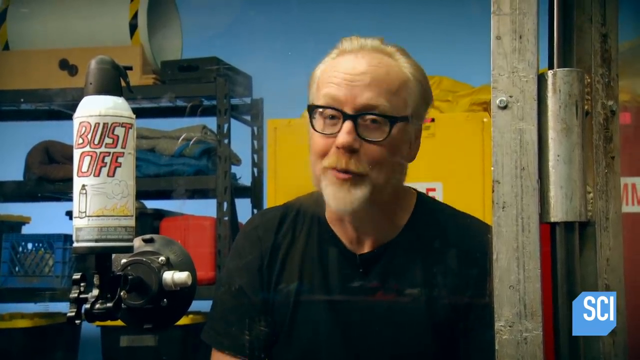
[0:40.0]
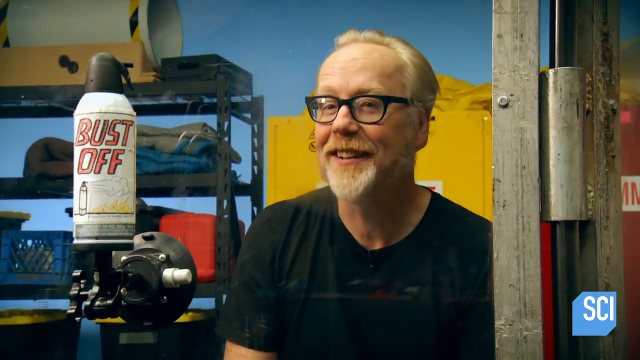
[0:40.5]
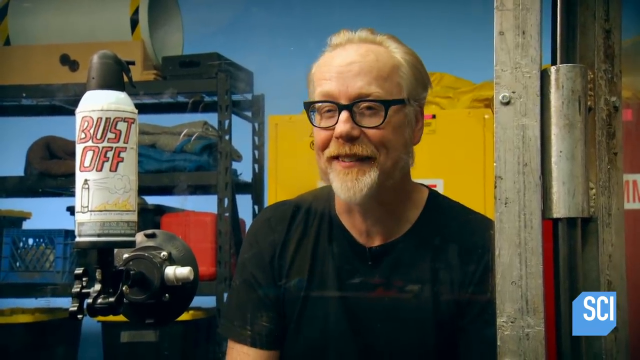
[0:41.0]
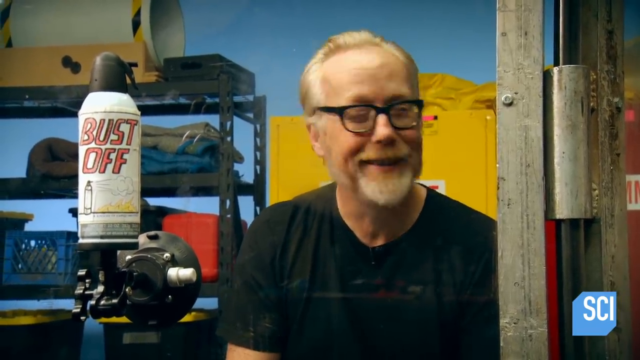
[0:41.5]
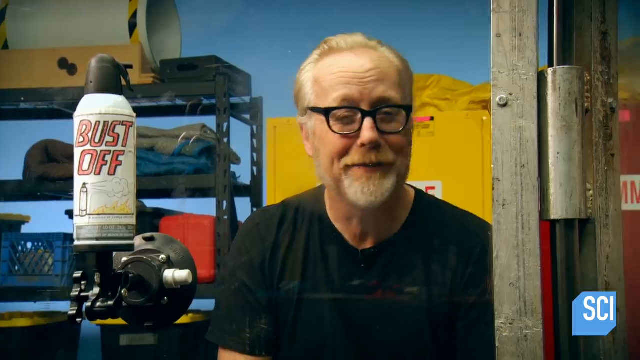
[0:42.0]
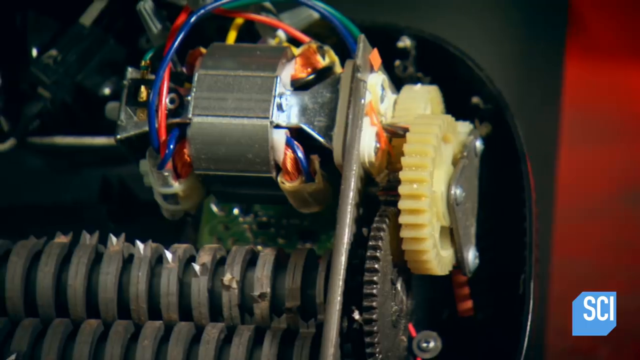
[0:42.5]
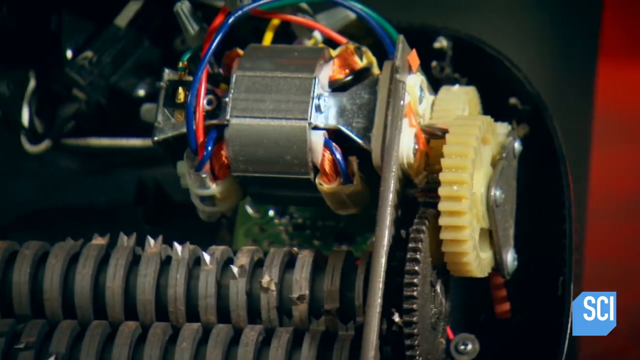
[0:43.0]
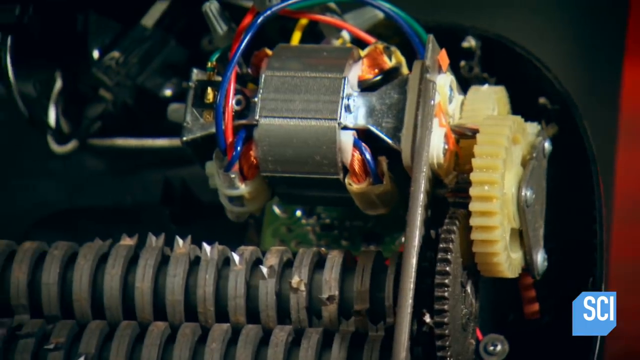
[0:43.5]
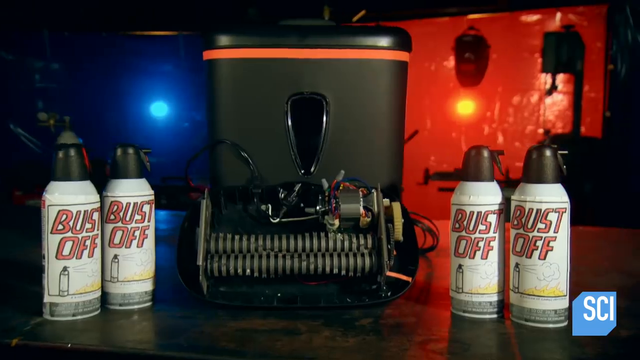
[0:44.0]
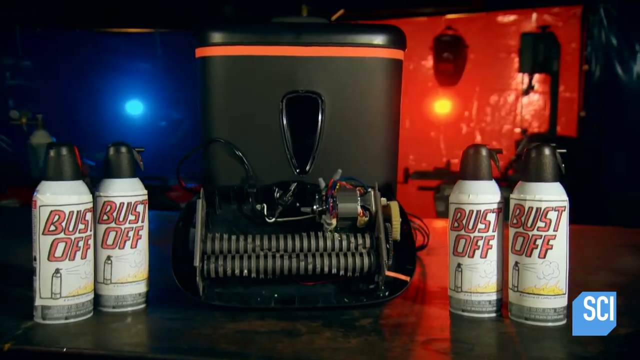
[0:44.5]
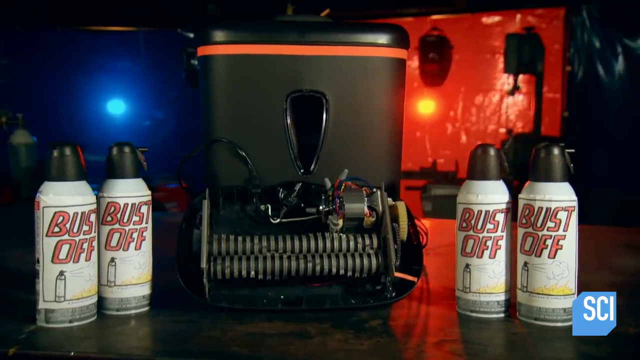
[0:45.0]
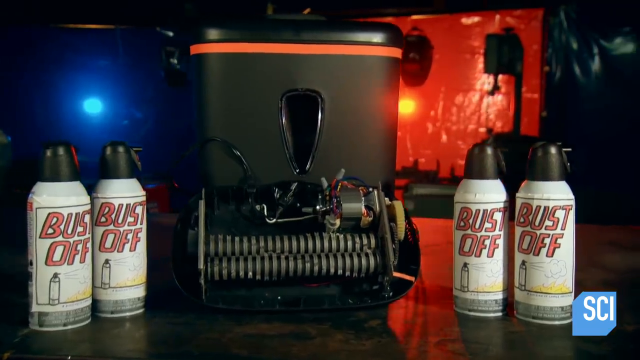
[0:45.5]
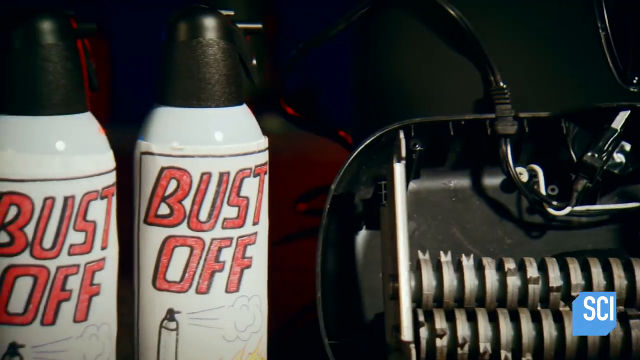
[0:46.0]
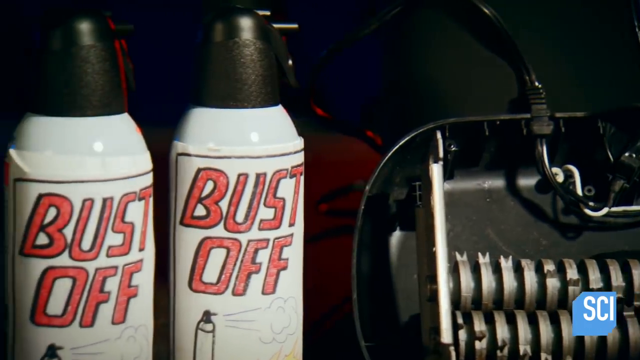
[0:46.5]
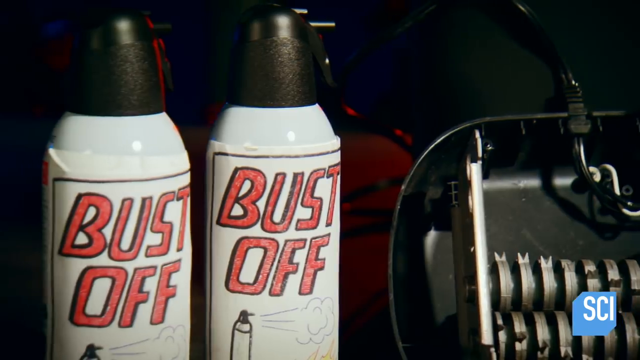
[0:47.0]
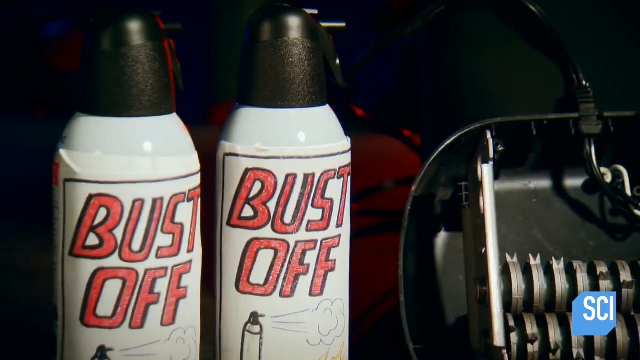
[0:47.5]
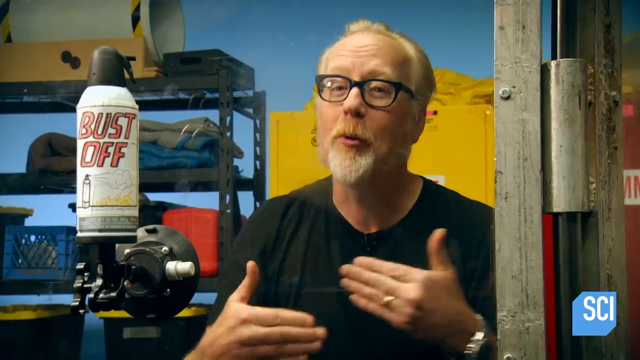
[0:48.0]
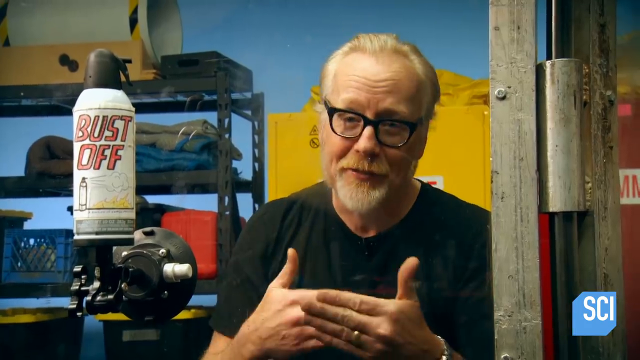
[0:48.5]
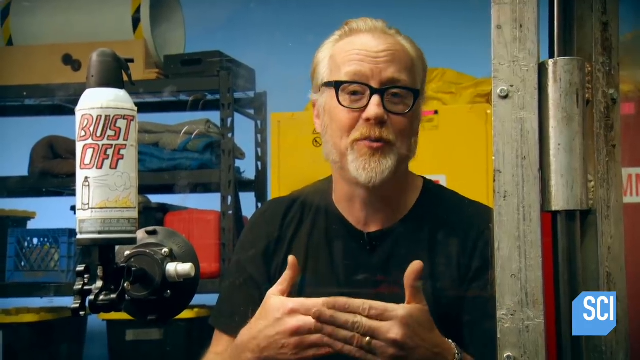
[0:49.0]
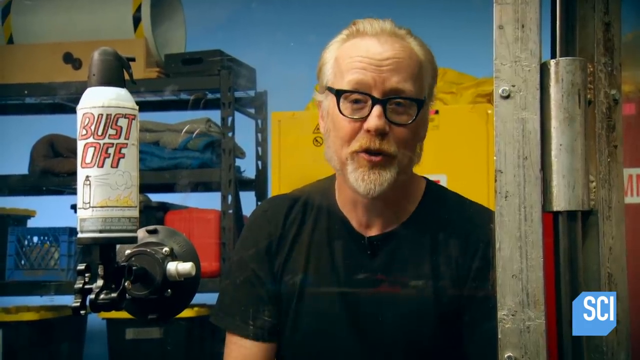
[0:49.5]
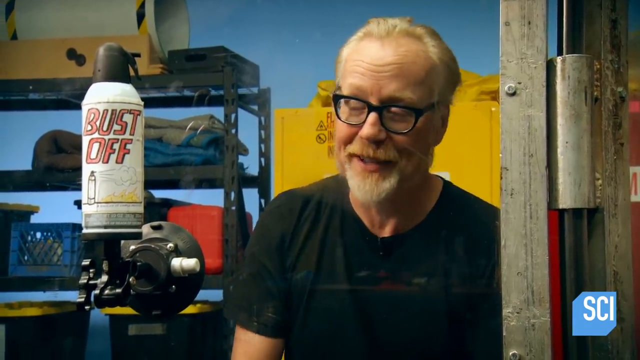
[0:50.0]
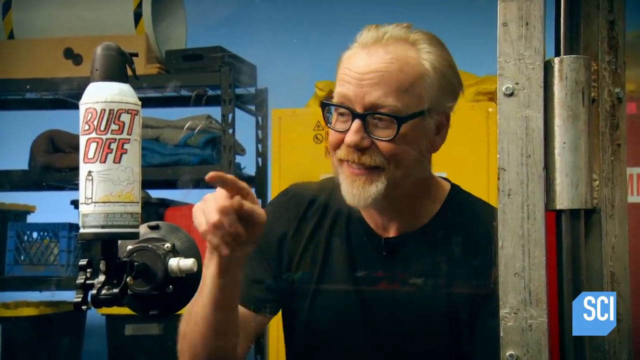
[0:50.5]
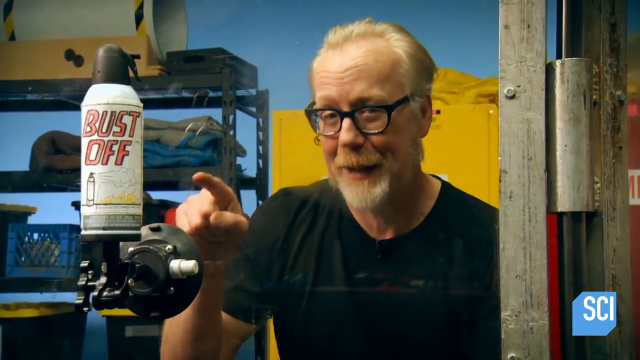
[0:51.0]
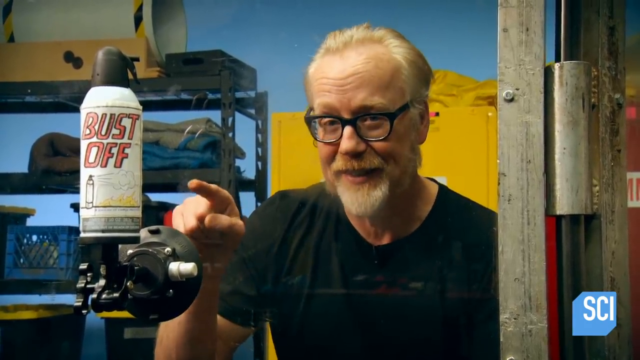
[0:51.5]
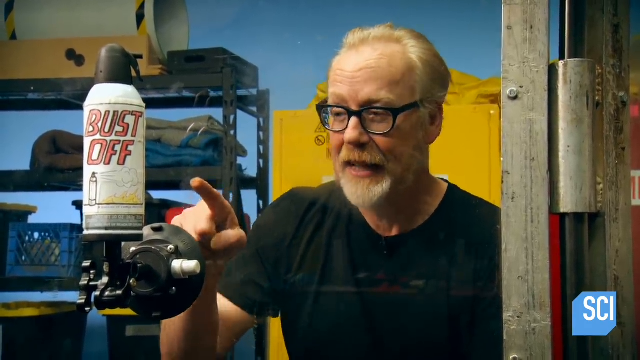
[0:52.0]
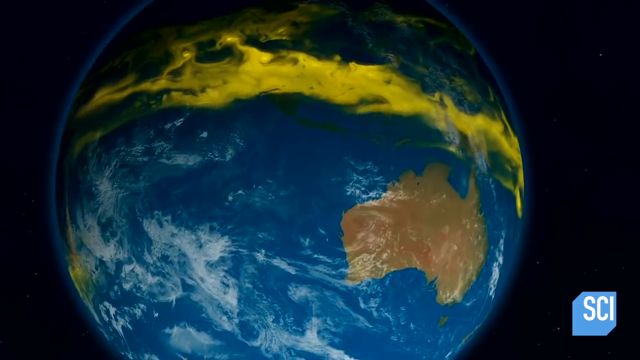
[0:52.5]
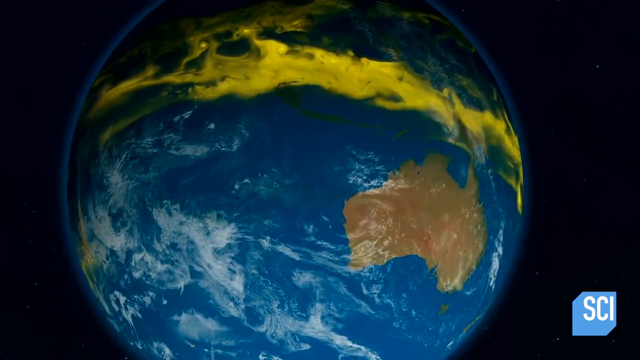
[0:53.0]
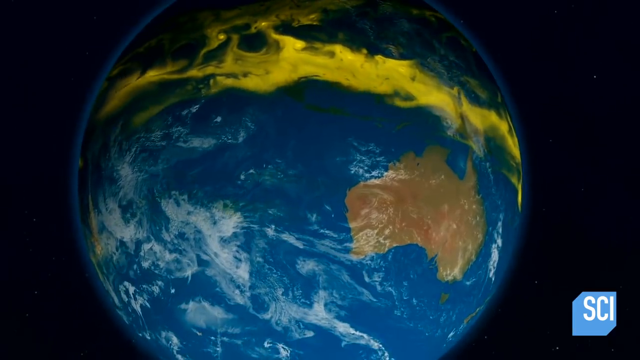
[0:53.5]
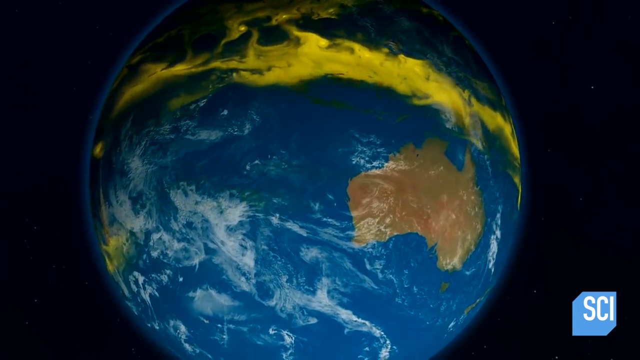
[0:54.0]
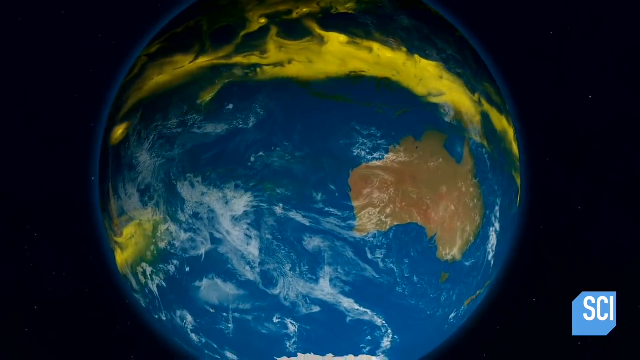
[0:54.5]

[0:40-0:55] Four cans of bust-off are shown, two on each side of a machine between them. A man with gray hair, a gray beard and black glasses, wearing a black short-sleeve shirt, talks about bust-off, smiling, and points at the machine. A picture of the earth appears with something almost like a yellow atmosphere across its top, and then the earth rotates with a blue-yellow atmosphere going around it.